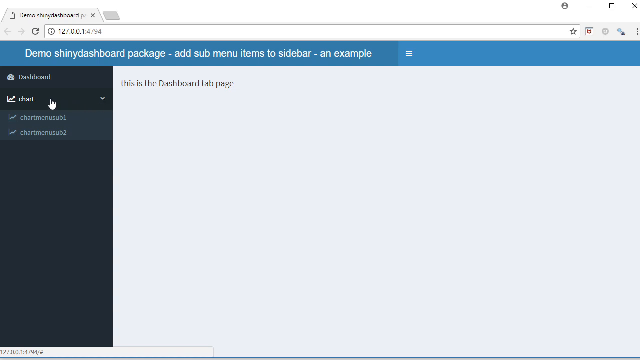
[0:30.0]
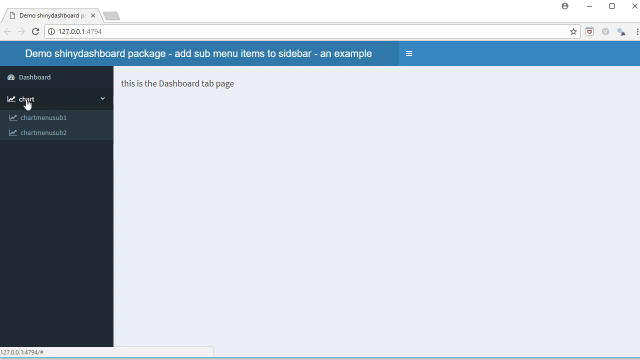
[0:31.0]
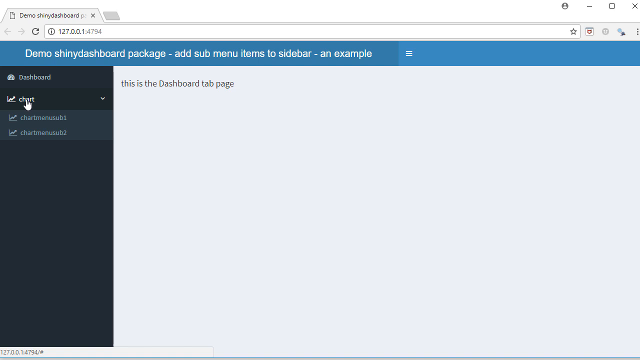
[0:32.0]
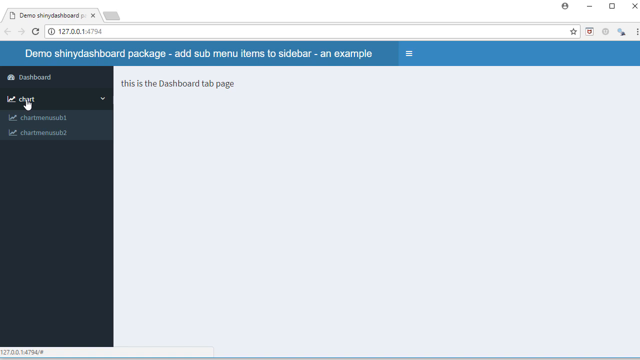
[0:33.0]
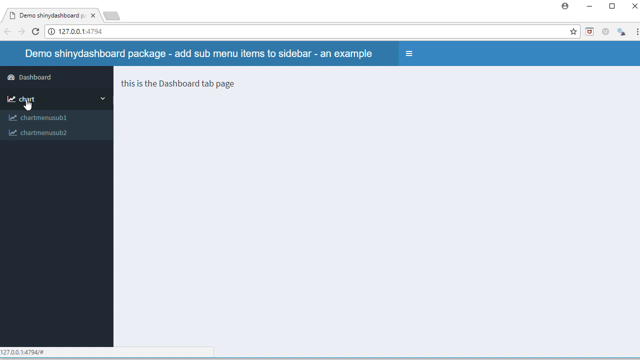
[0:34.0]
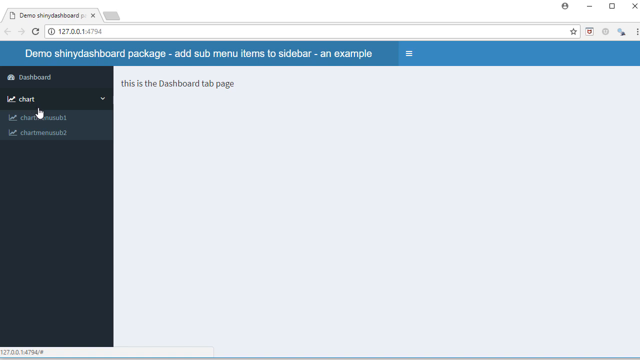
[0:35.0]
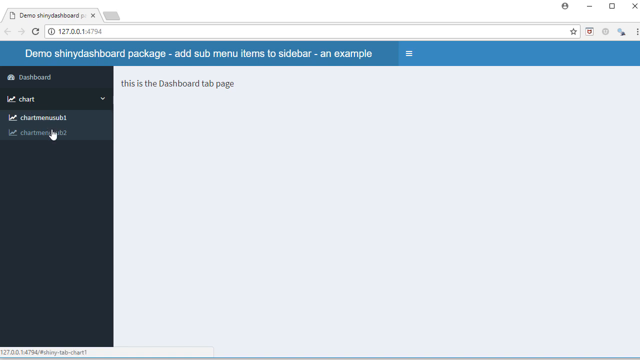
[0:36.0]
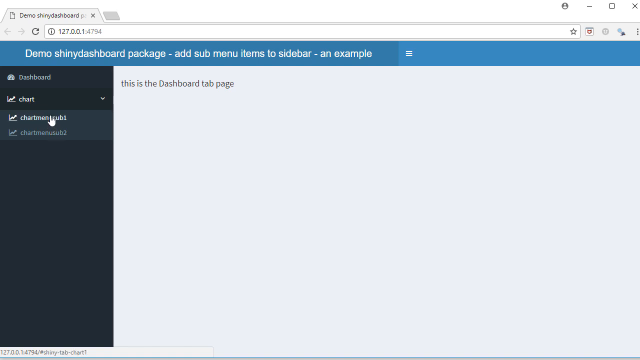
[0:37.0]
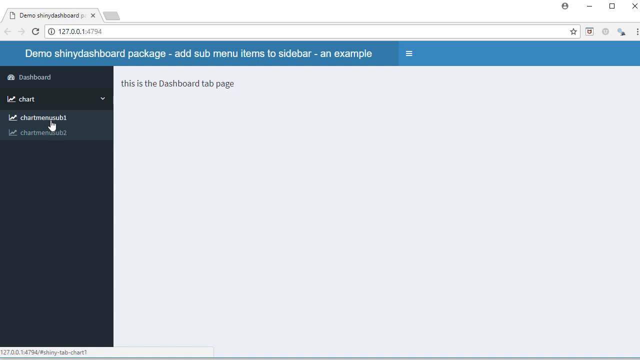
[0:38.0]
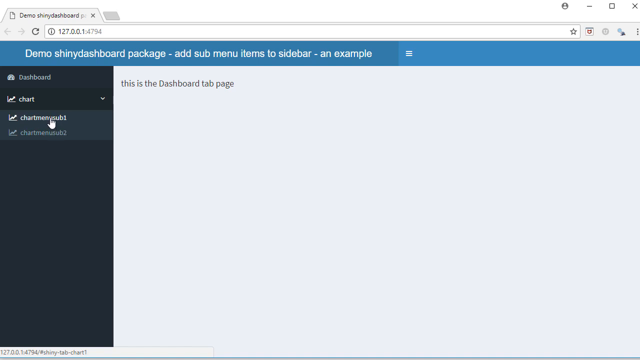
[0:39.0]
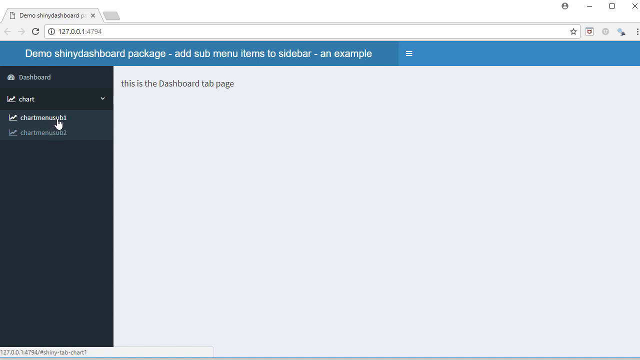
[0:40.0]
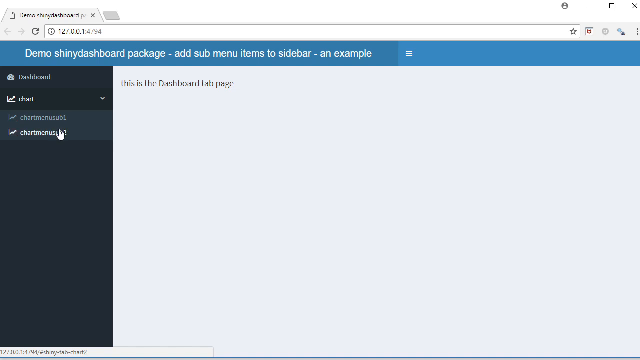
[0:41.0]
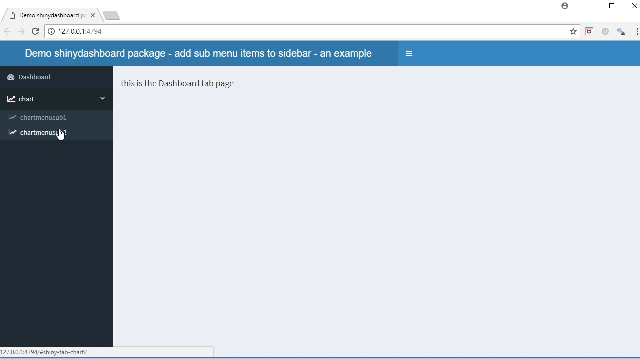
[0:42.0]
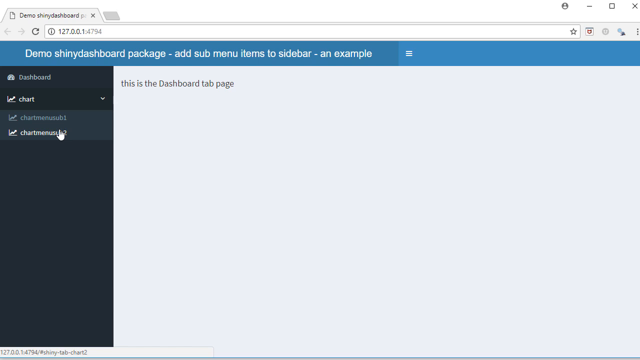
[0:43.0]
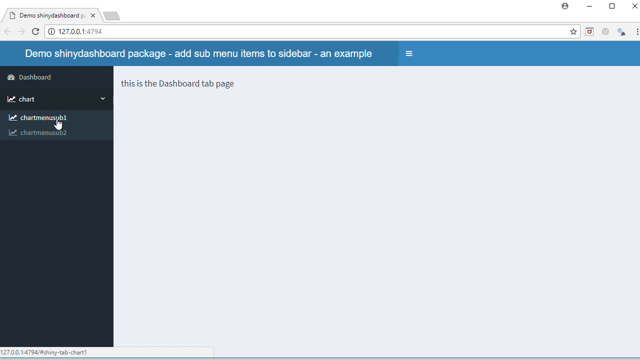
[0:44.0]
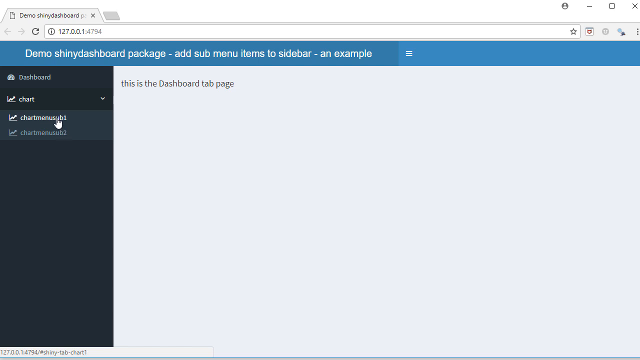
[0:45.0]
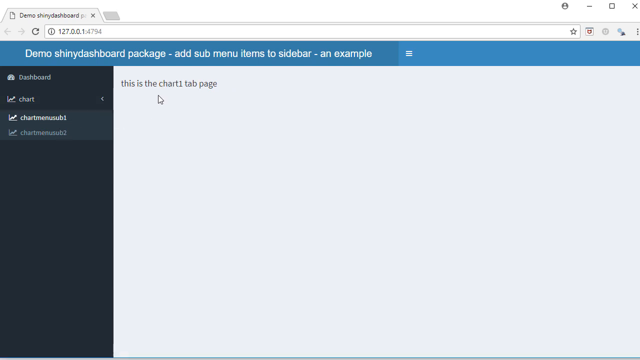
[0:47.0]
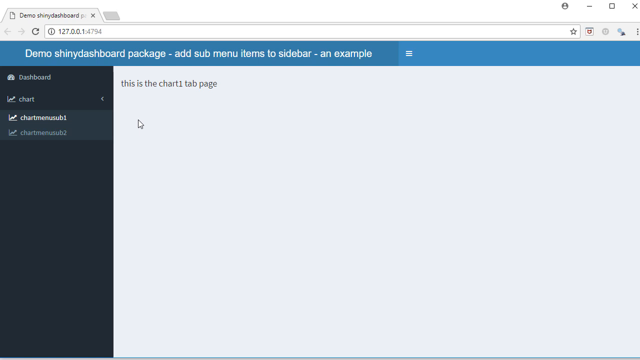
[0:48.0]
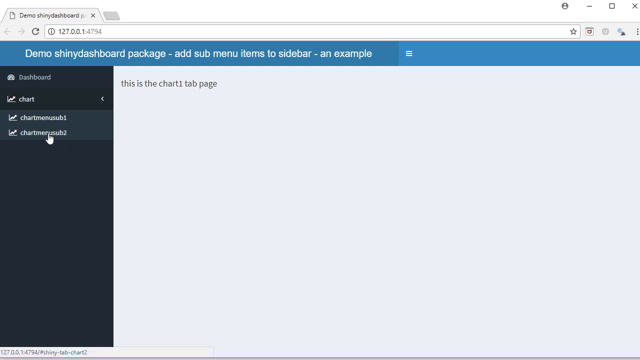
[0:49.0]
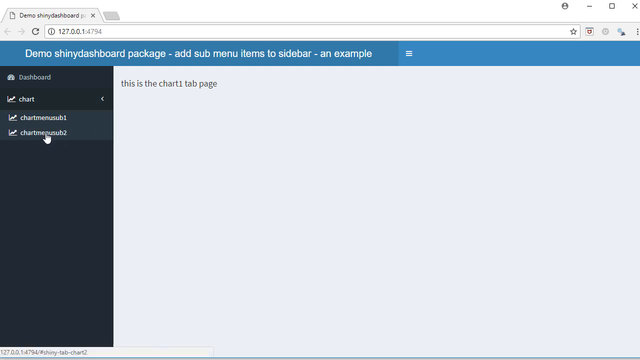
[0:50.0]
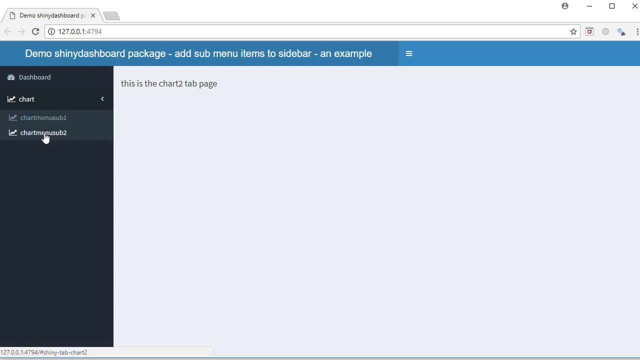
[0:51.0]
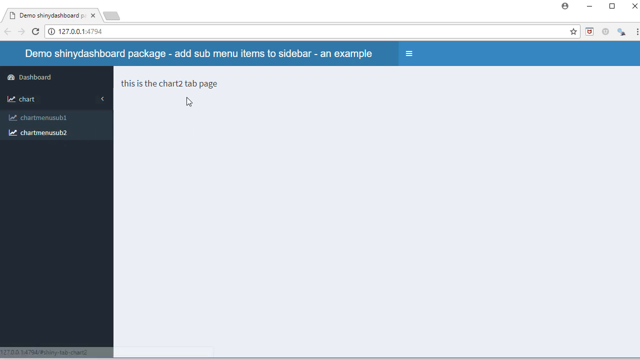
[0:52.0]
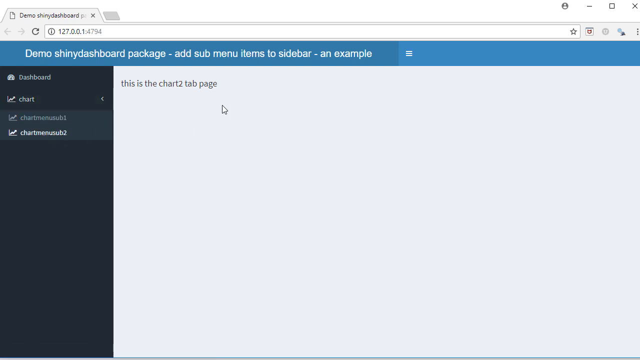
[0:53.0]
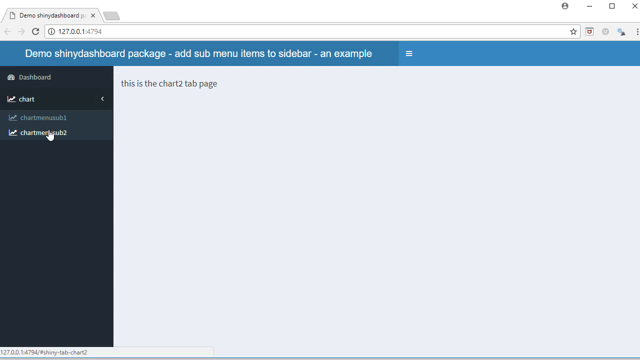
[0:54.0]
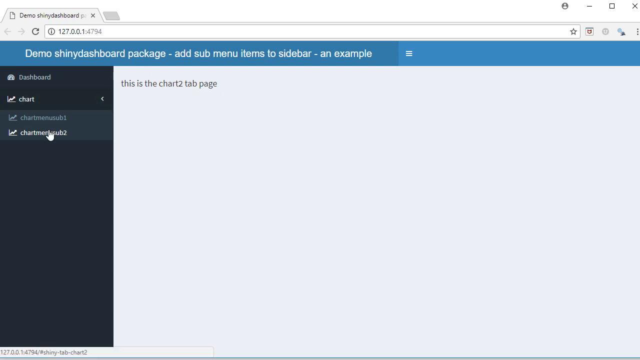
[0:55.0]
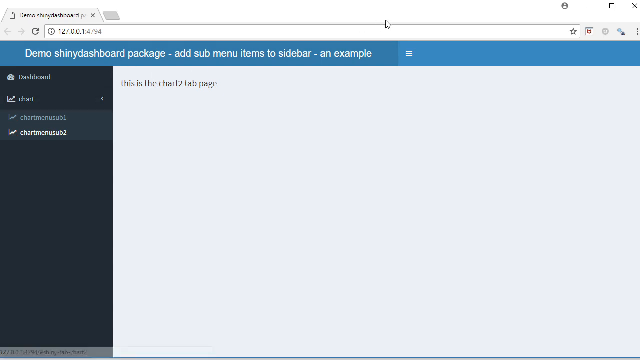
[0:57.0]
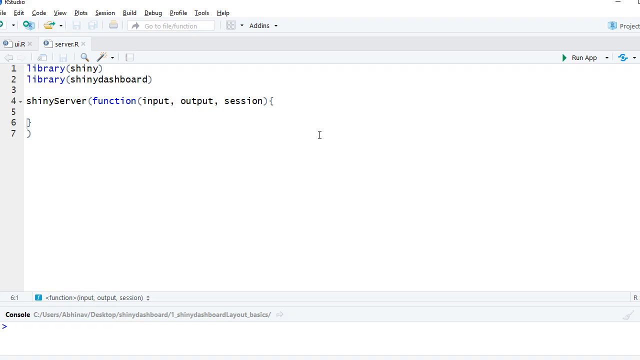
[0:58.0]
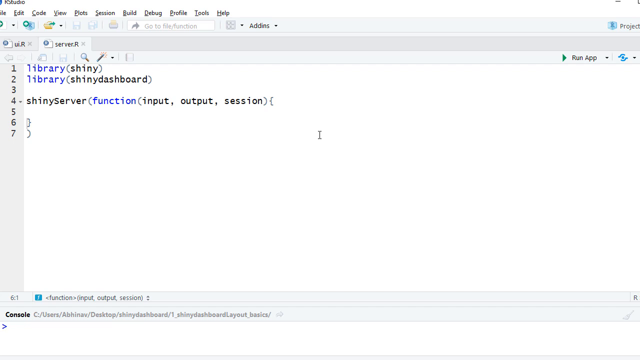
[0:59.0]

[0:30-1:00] On the left-hand side the page reads "dashboard," with "charts" underneath and the two chart items, one and two, below that. The cursor moves back and forth between the first and second items without clicking anything. Text then reads "this is a chart one tab only," and the user clicks on chart two, after which it reads "chart two tab only" while the cursor moves in little circles. The user then clicks on the chart, apparently chart two, and the whole page turns white, like a computer page that opens up. Down the left-hand side are the line numbers 1 through 7. Line 1 has "library" in blue followed by "shiny" in parentheses in black. Line 2 has "library" in blue followed by "shiny dashboard" in parentheses in black. Line 3 is blank. Line 4 has "shiny server" in black, then "function" in blue, then "input output session" in parentheses in black. Lines 5, 6 and 7 are blank.